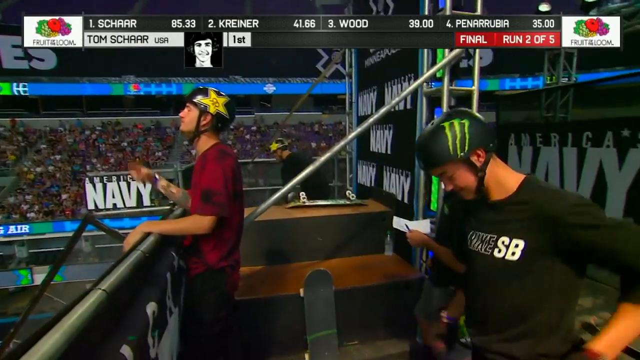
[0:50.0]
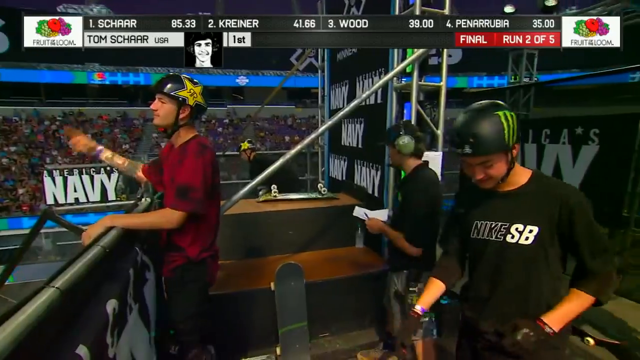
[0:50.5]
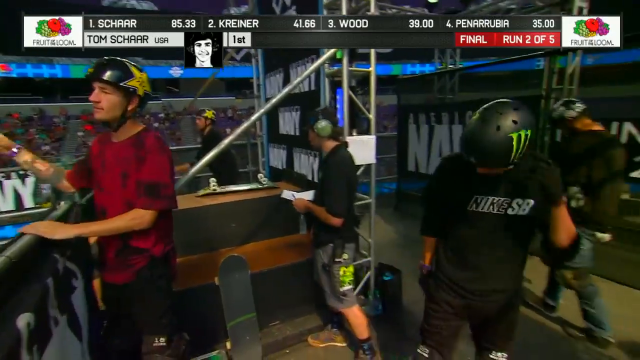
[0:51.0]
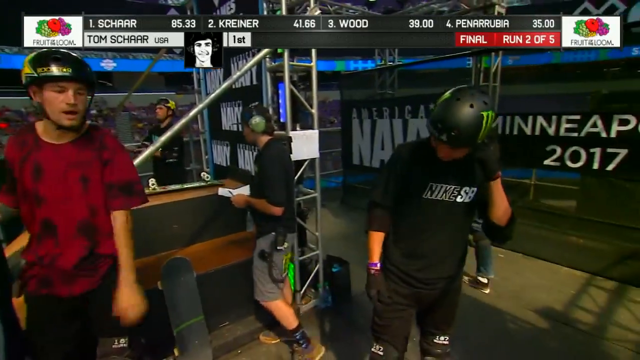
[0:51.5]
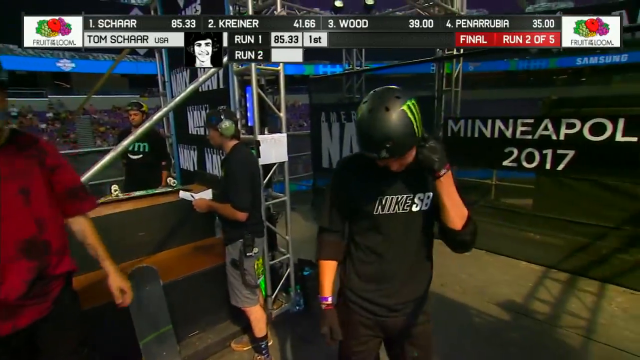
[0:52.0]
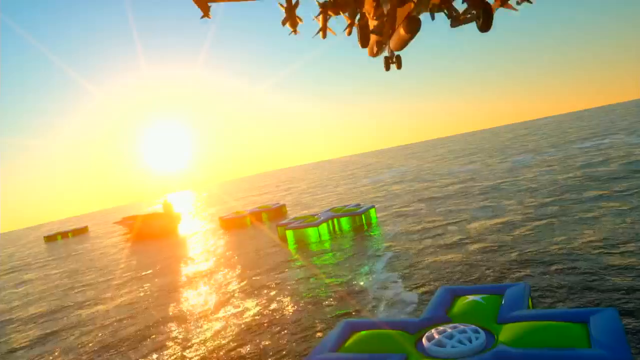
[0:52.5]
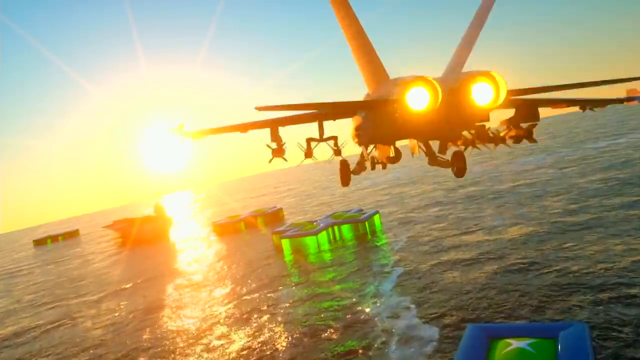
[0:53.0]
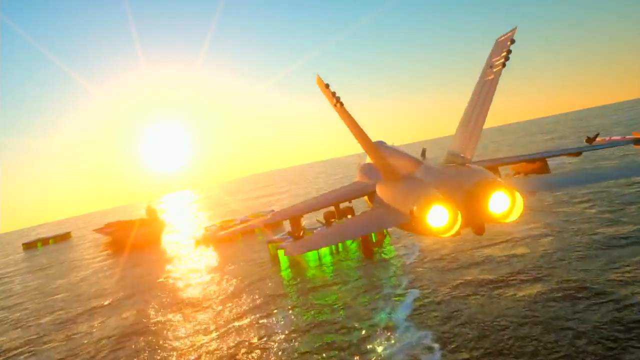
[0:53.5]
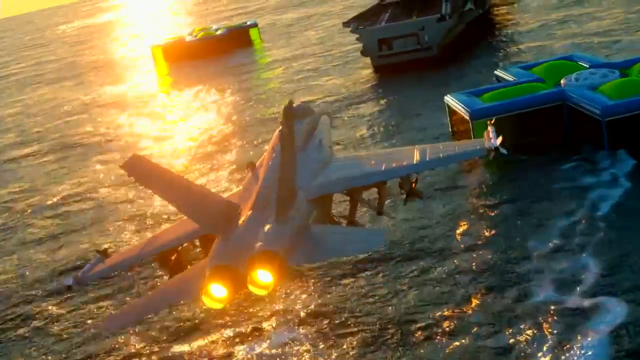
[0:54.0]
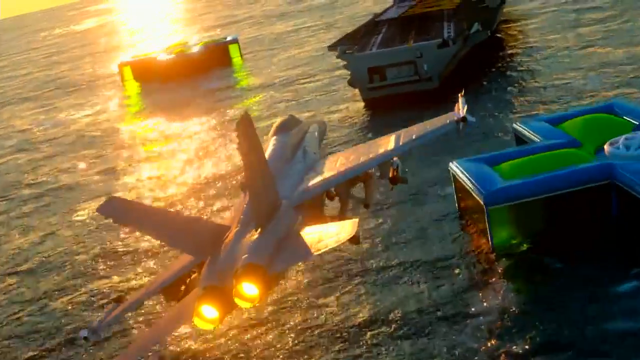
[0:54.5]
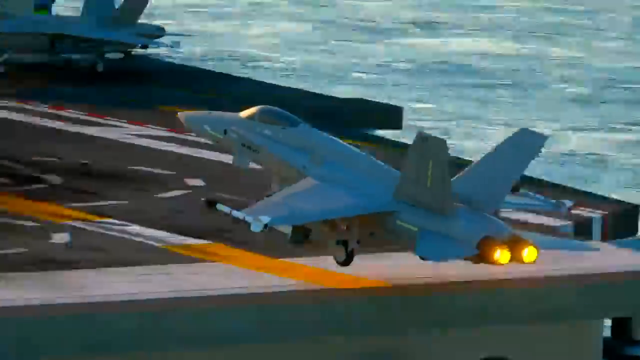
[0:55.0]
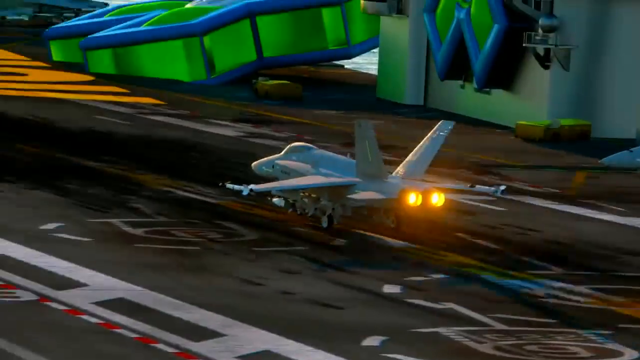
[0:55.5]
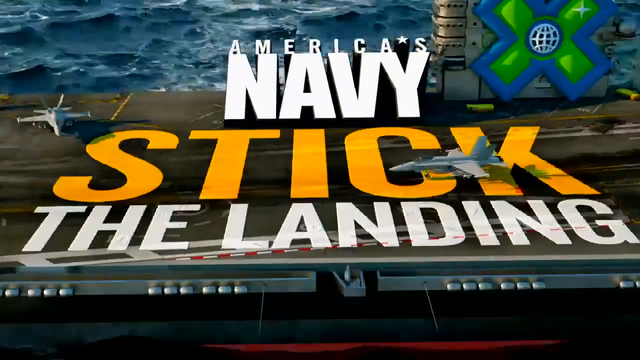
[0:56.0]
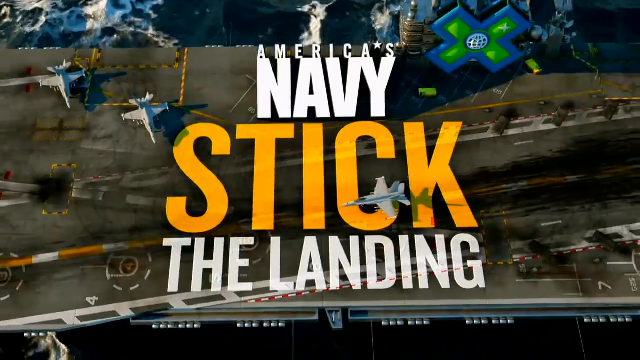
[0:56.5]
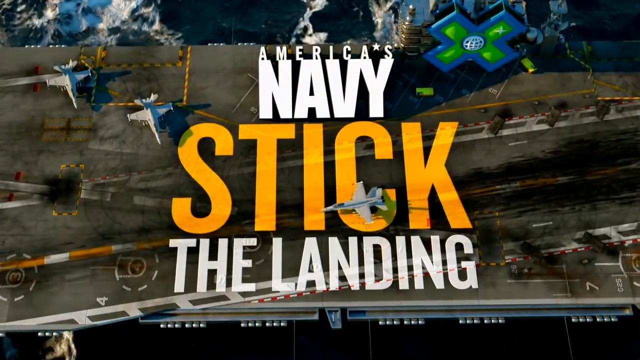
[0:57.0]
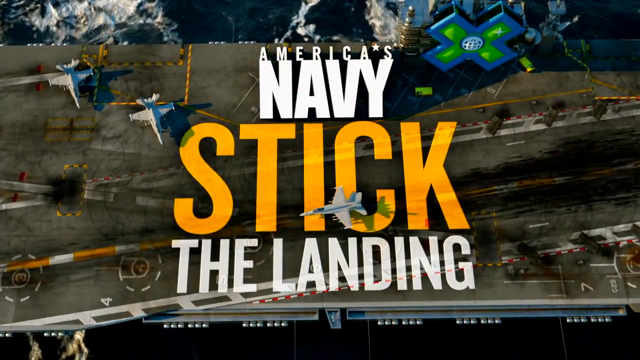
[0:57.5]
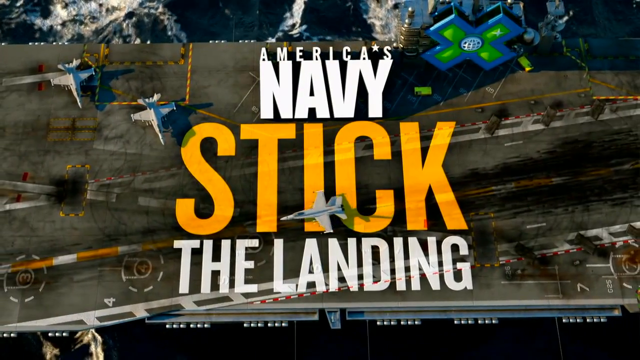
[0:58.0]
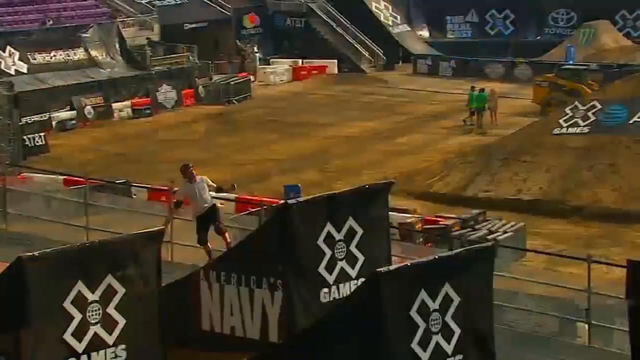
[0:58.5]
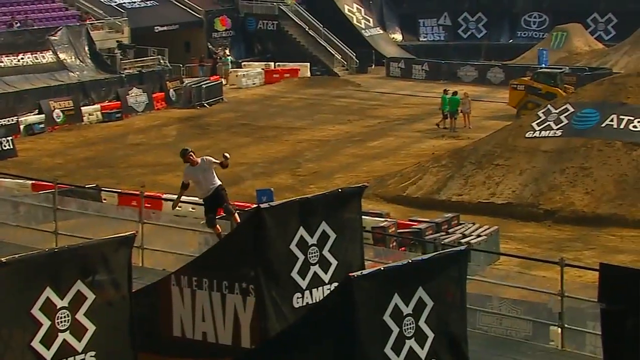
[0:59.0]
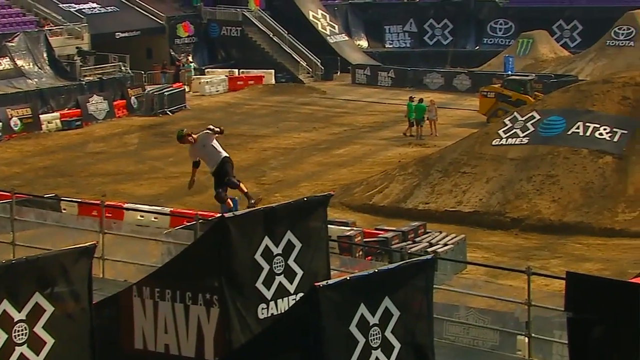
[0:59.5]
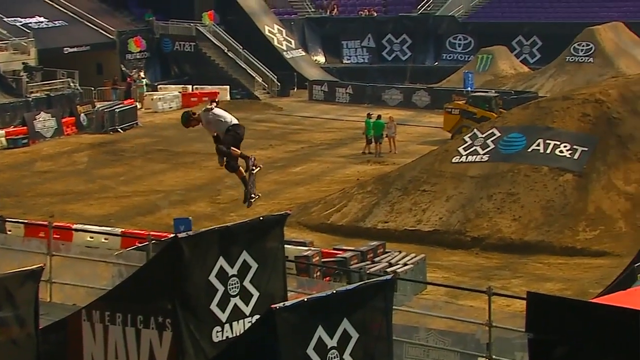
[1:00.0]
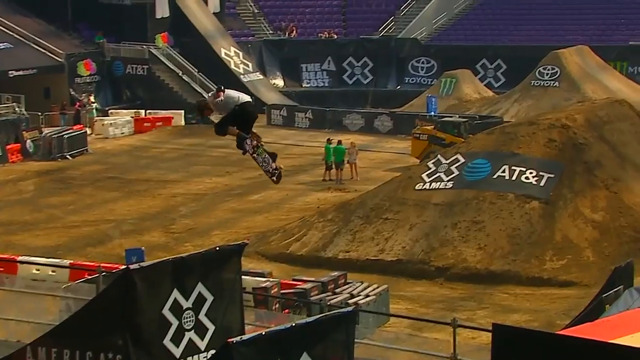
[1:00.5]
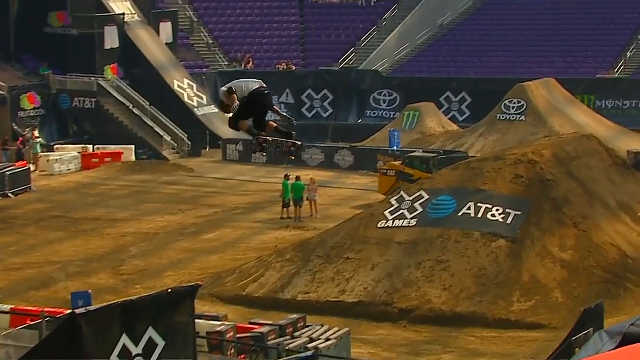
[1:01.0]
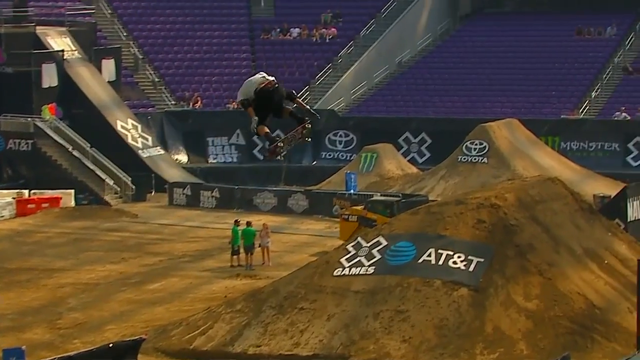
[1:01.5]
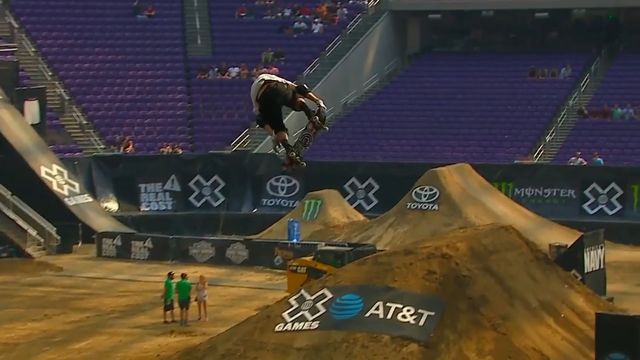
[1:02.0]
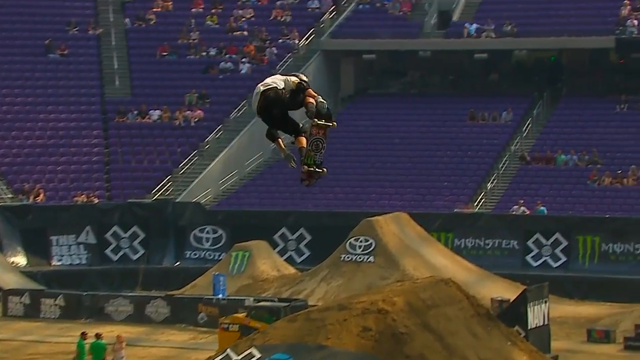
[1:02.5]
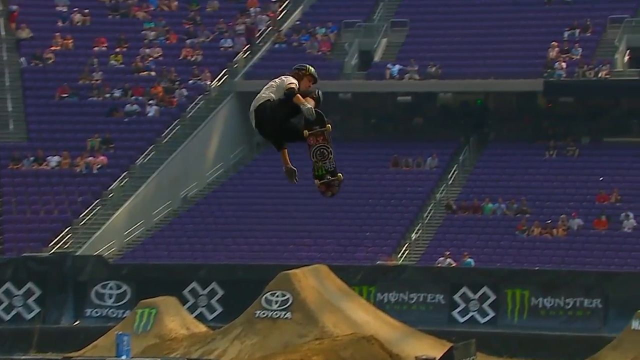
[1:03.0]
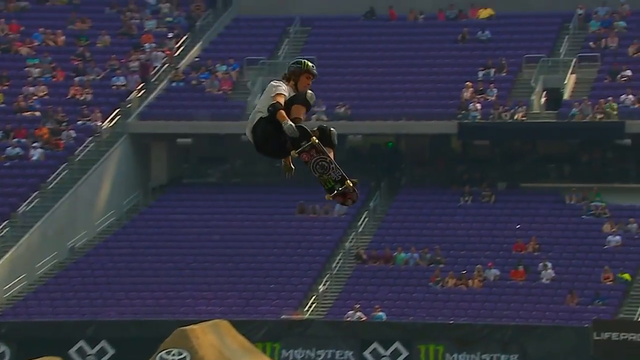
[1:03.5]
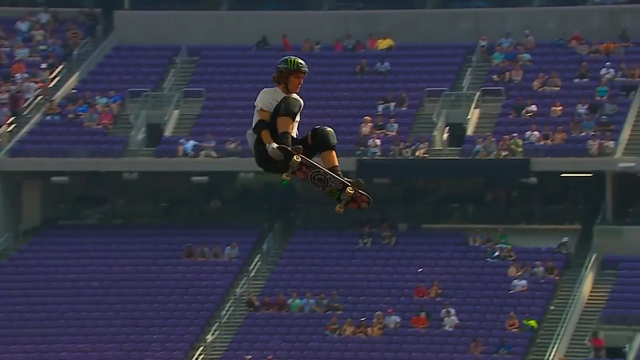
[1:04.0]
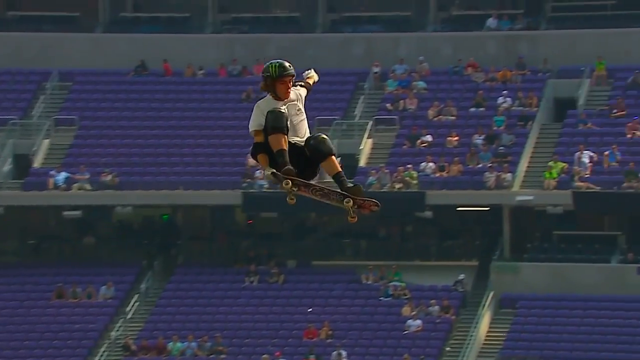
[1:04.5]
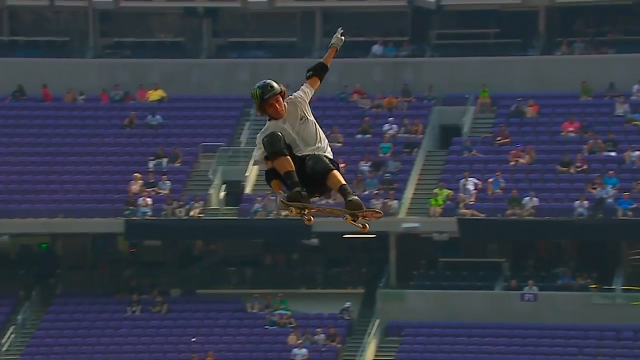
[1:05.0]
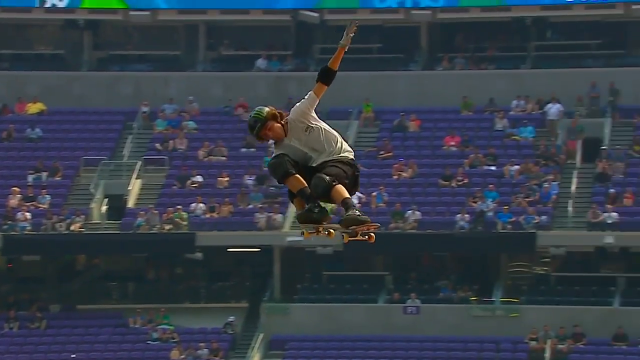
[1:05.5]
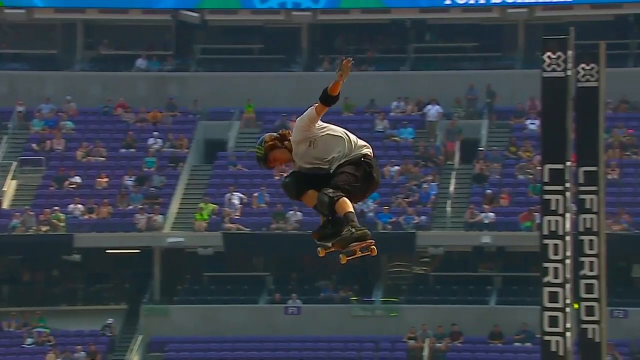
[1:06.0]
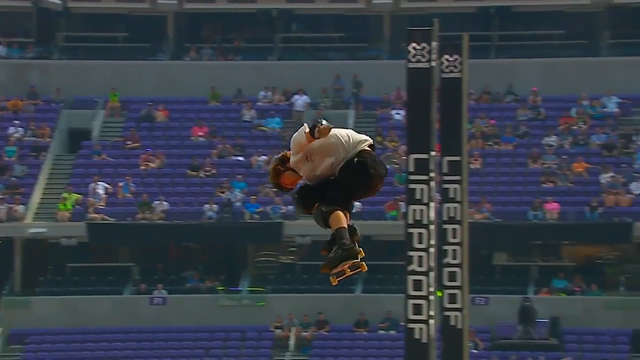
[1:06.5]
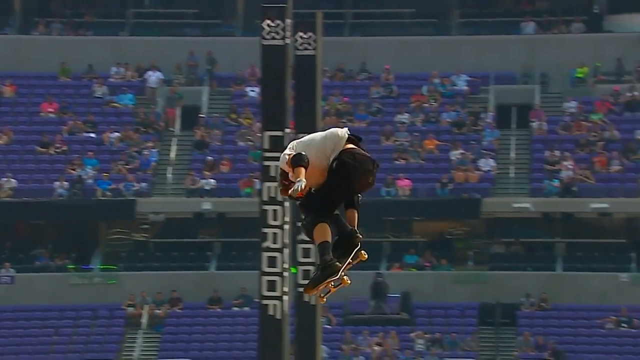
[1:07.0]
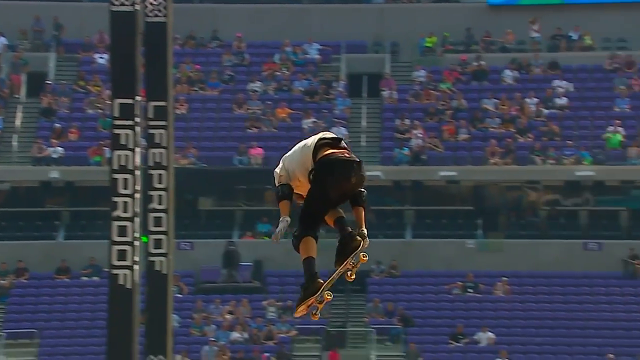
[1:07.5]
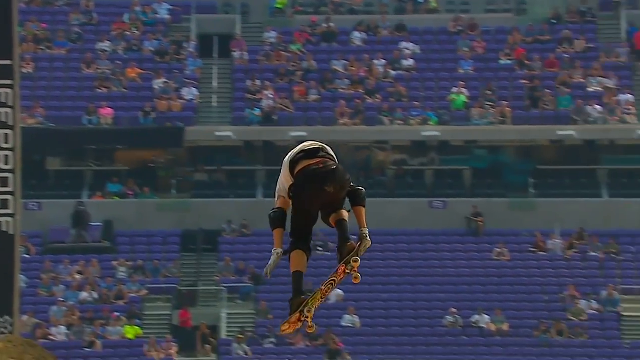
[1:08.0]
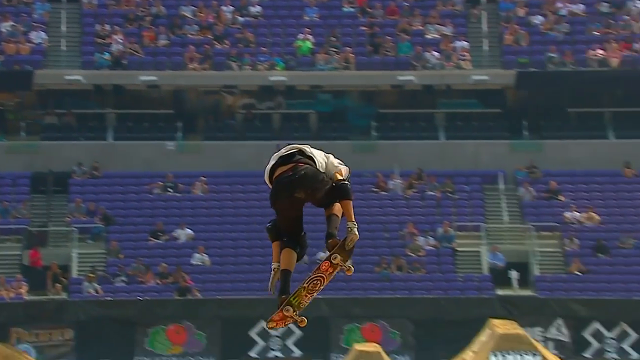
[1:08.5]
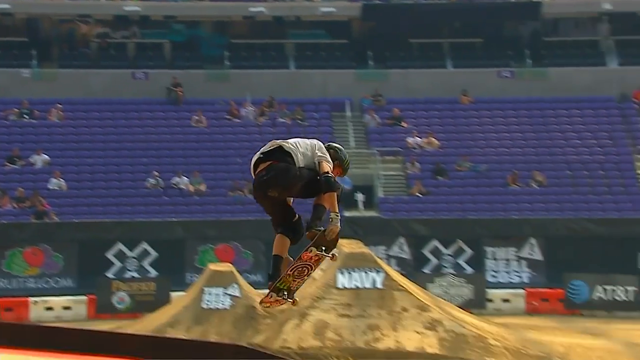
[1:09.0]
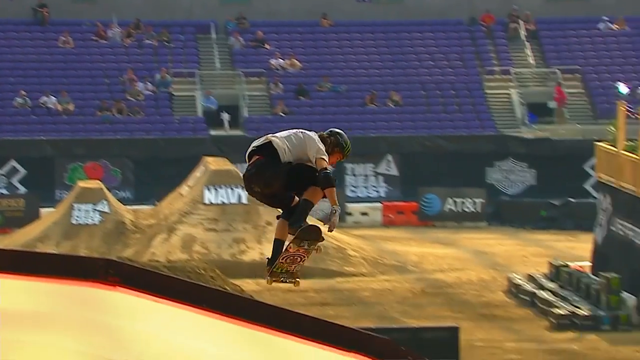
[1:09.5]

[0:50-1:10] The Asian skateboarder and the white skateboarder stand gesturing down to the bottom of the halfpipe, then seem to loosen themselves up for the competition. The video cuts to what appears to be a commercial: a fighter jet flies over a green X on the water and then lands on an aircraft carrier. The carrier bears a big X Games logo in lime green with a blue outline and a white world outline in the center. On the top deck of the carrier, text reads "America's Navy" in white, "STICK" in big yellow letters, and "THE LANDING" at the bottom. The video then cuts to Tom skating over the big middle jump on the halfpipe. He turns in the air what looks like three times with his hands on the skateboard, then heads down toward the landing, smooth and unshaken. Another halfpipe and the stadium setup are visible in the background; it all looks to be on the floor of a football stadium.